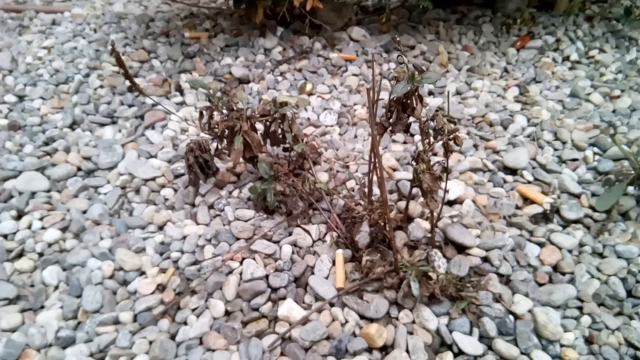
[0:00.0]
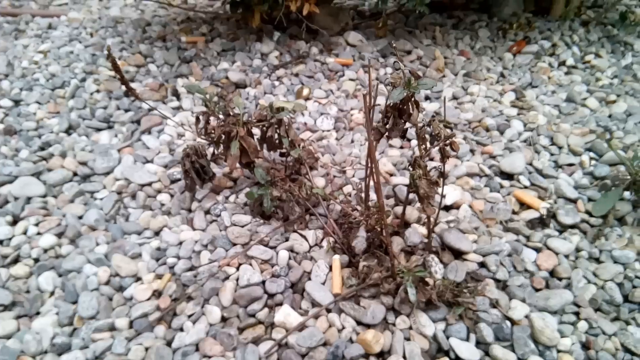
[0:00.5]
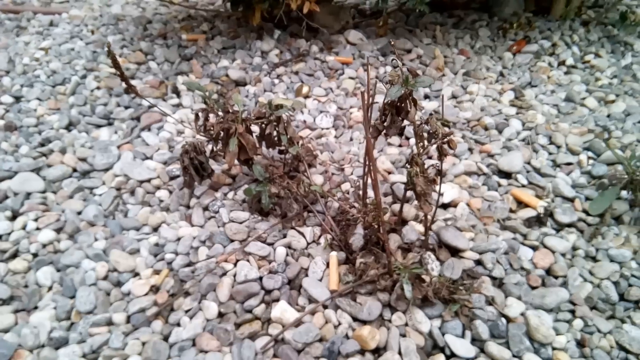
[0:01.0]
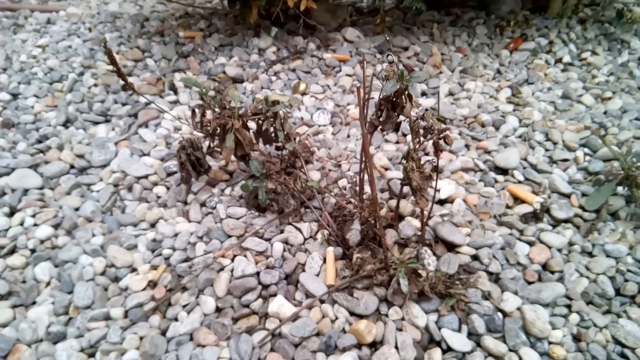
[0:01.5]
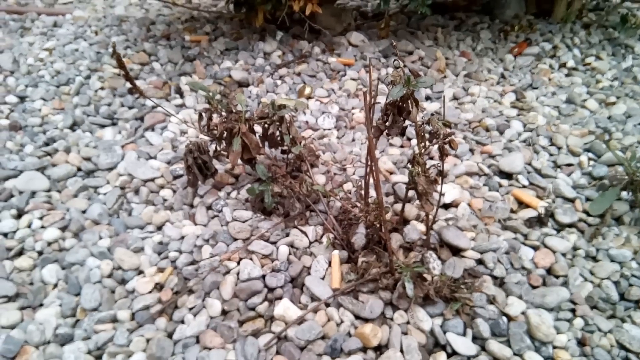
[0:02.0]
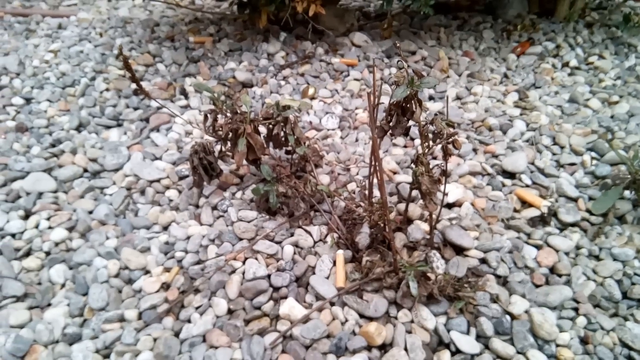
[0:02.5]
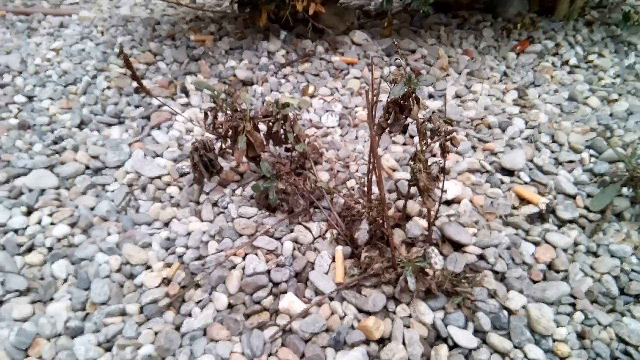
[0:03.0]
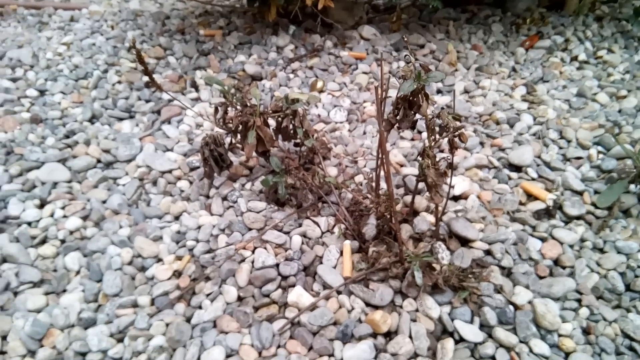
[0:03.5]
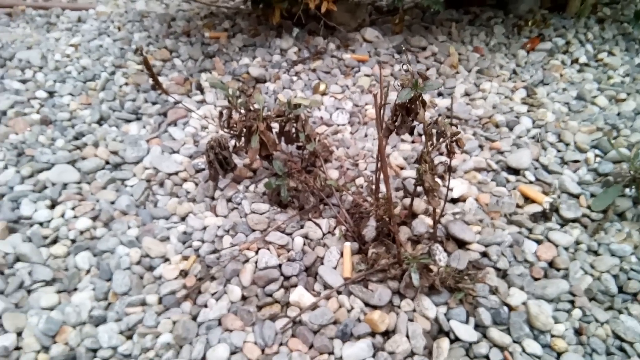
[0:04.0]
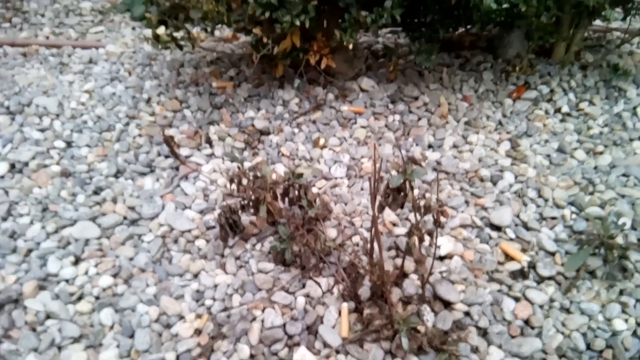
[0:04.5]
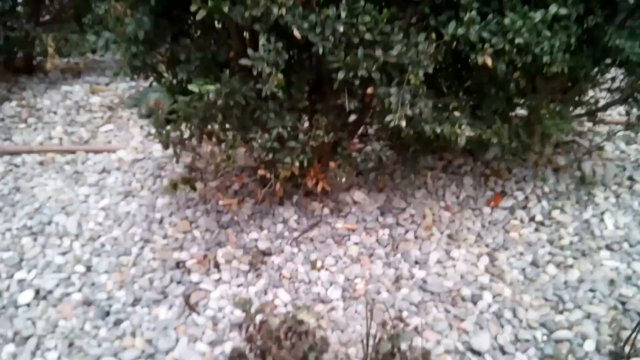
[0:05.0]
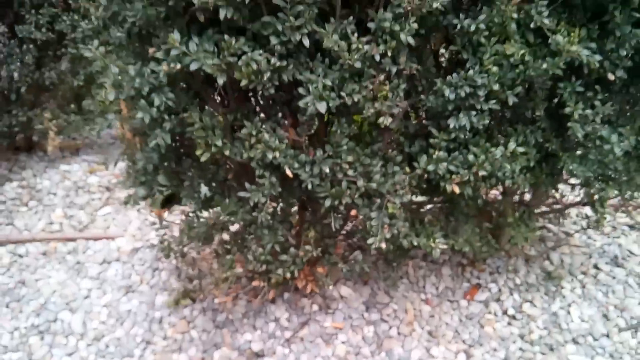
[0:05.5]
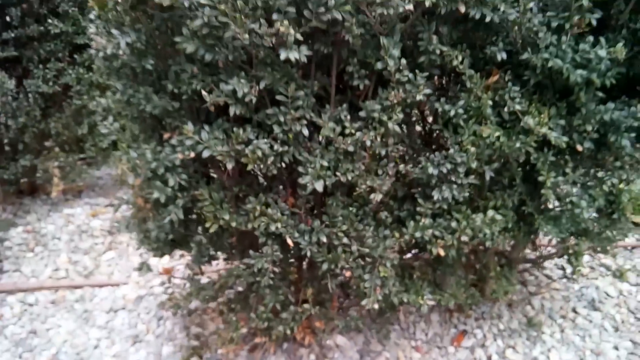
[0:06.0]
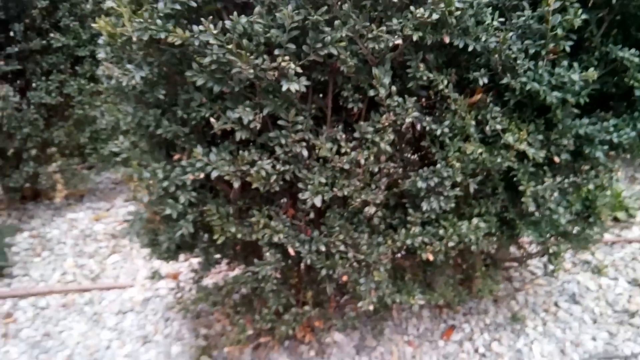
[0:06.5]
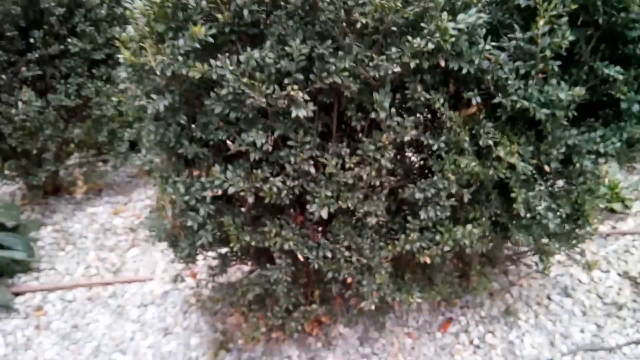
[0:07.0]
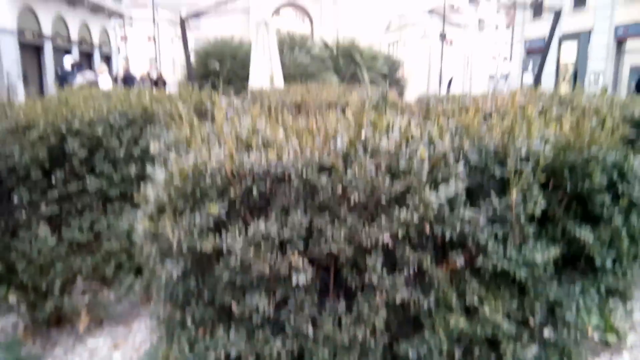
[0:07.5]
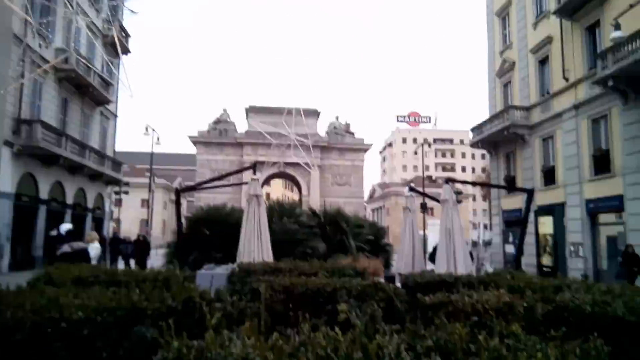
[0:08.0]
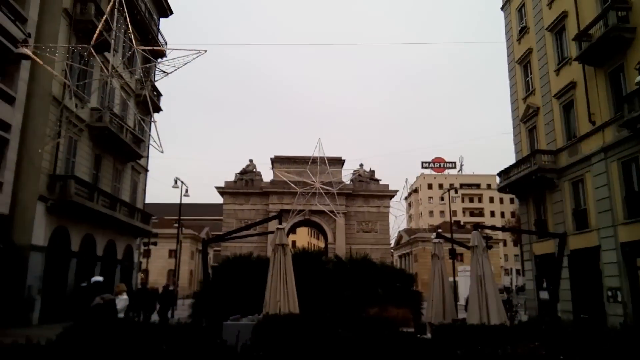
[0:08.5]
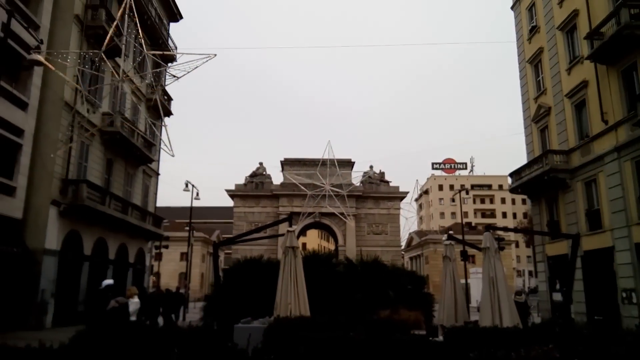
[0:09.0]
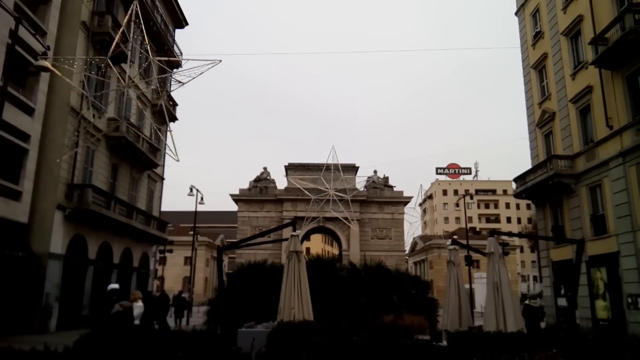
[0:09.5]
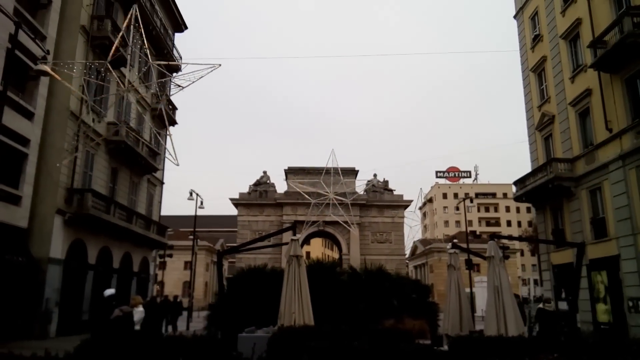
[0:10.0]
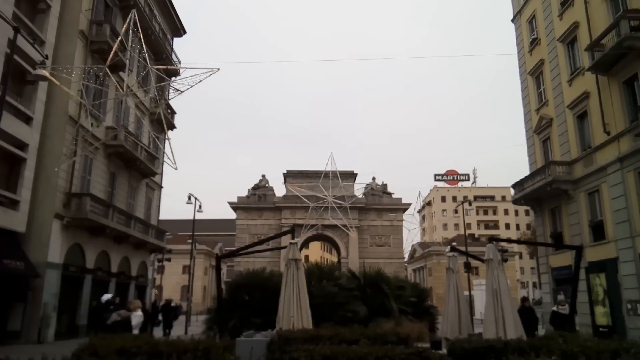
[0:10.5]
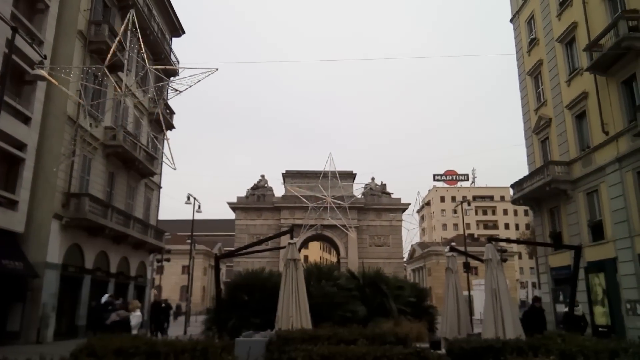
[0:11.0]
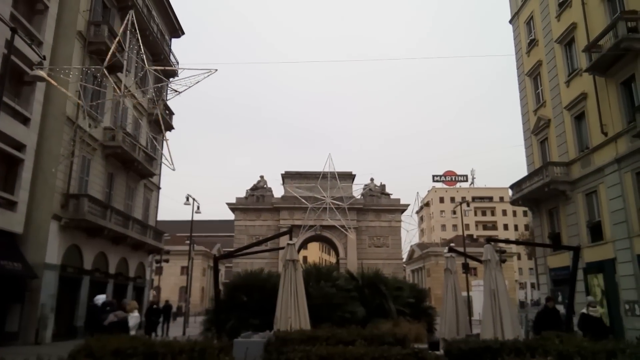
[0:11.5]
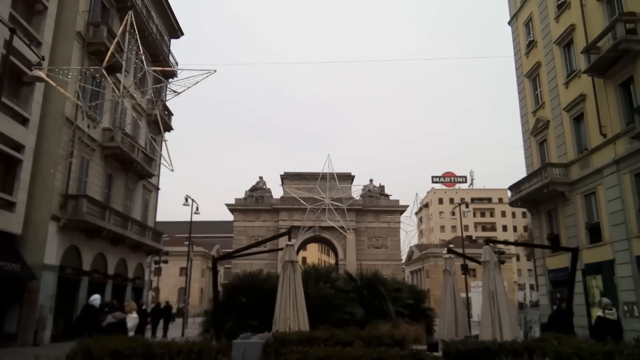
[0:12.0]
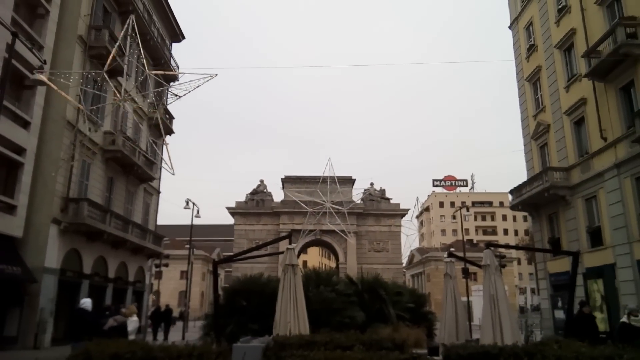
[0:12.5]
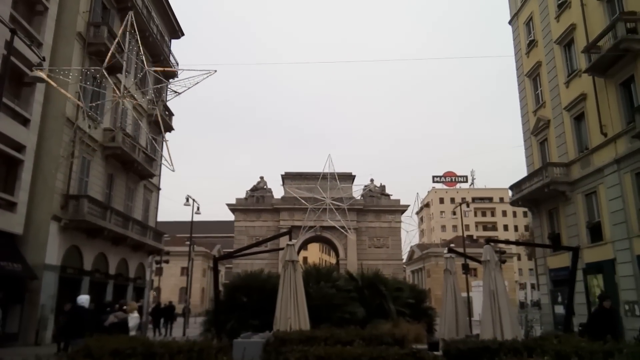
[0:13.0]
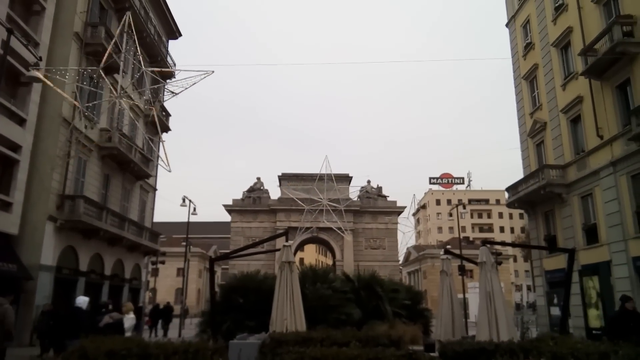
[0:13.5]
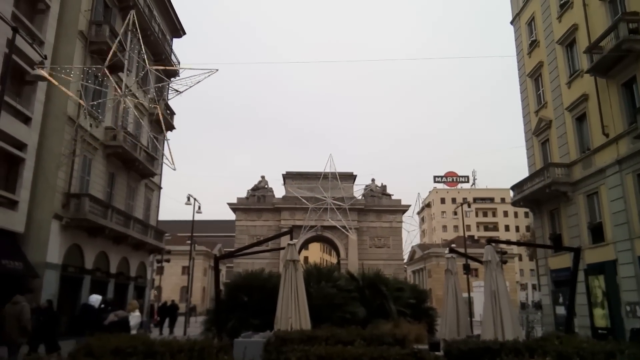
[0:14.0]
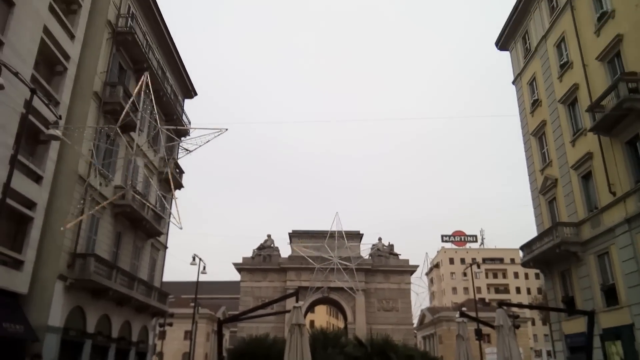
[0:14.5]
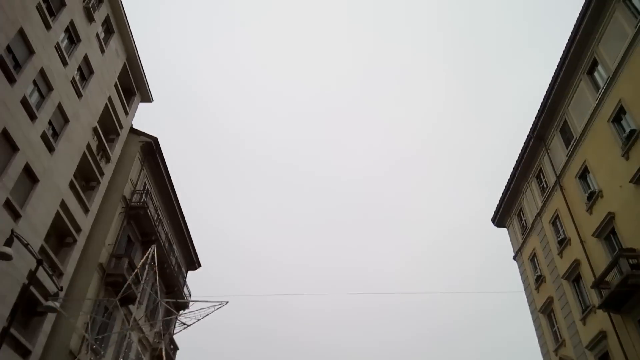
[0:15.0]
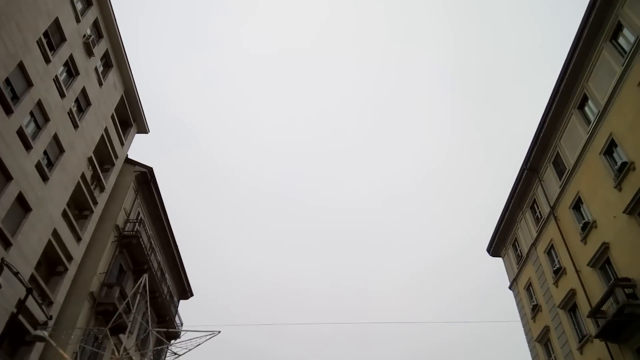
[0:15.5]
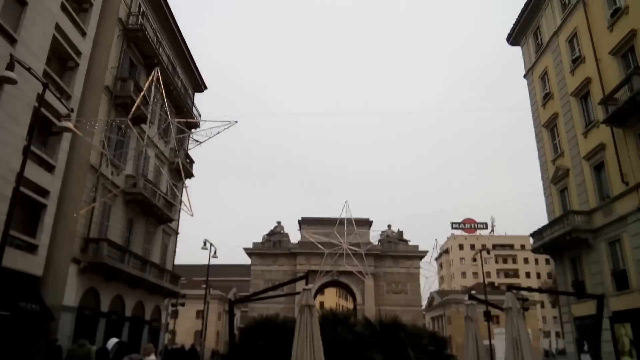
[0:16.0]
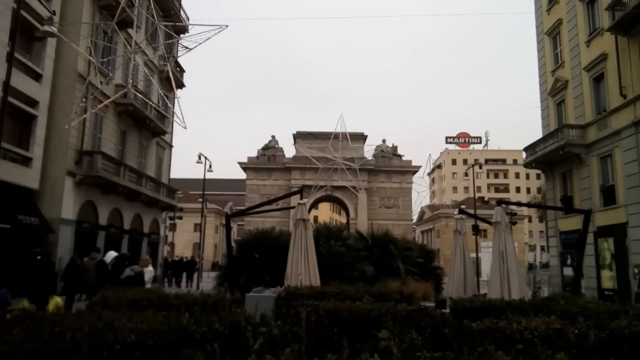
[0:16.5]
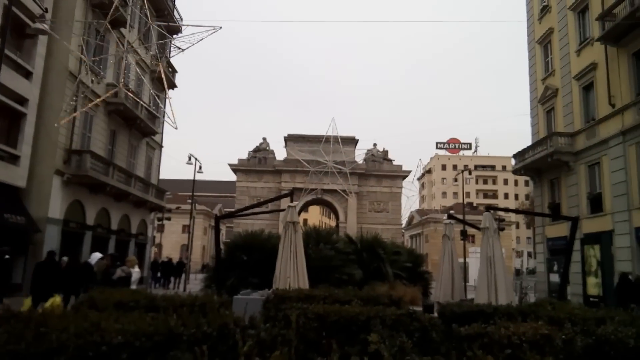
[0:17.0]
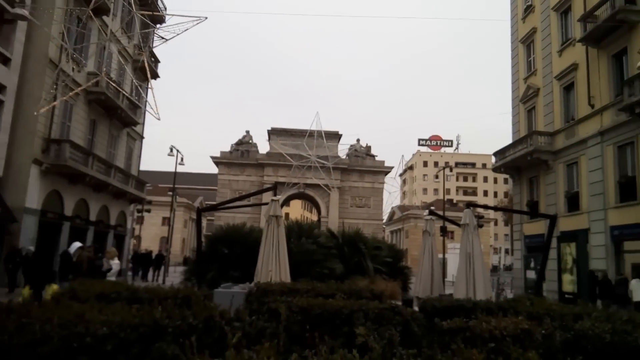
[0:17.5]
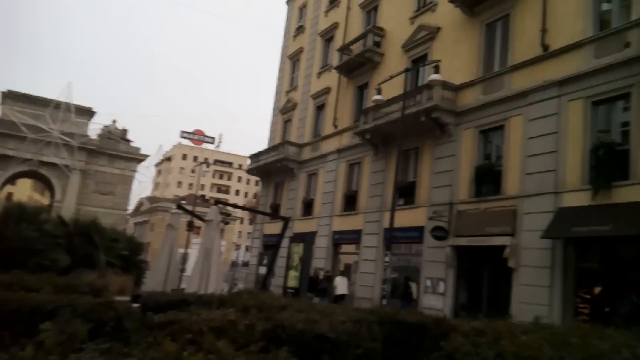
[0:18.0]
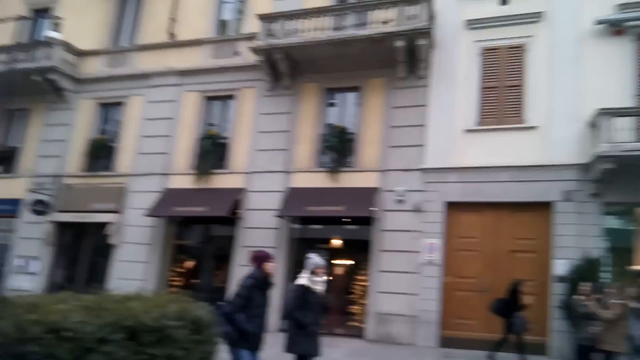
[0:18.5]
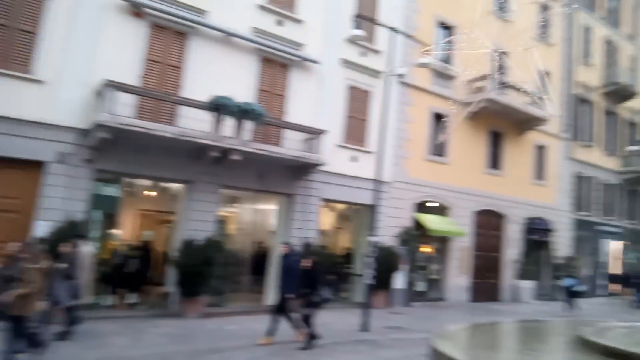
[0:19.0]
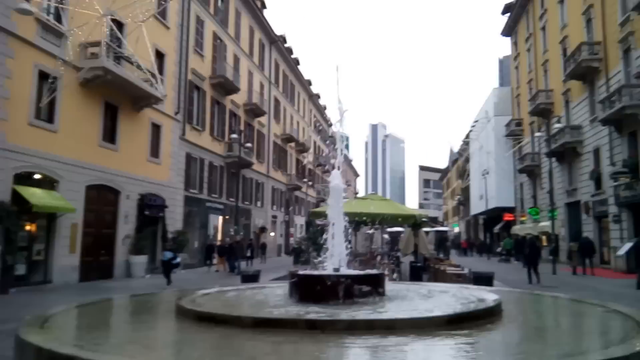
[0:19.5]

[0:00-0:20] What looks like a phone recording begins on something on the ground among some pebbles; it looks like a dead plant, brown, skinny and brittle. The camera eventually pans up to a tall bush and then above it to some buildings in an older, European-looking style. Big transparent stars with a structure to them hang between the buildings. The day is very cloudy; the camera pans up slightly to the sky and then looks back down at the stars between the buildings. The camera then pans around to the back, revealing a fountain behind the person recording. The surrounding buildings have lots of balconies, are mostly beige, and use a lot of what looks like brick or stone. The place appears to be in a European country.